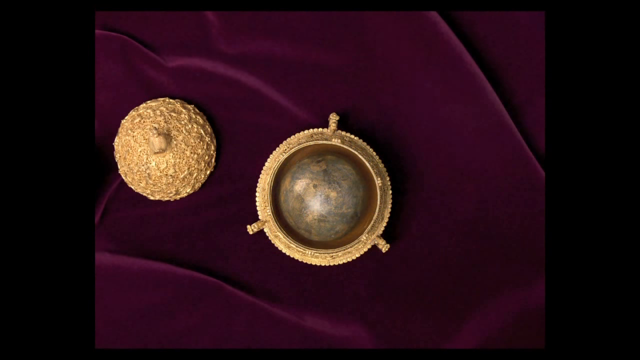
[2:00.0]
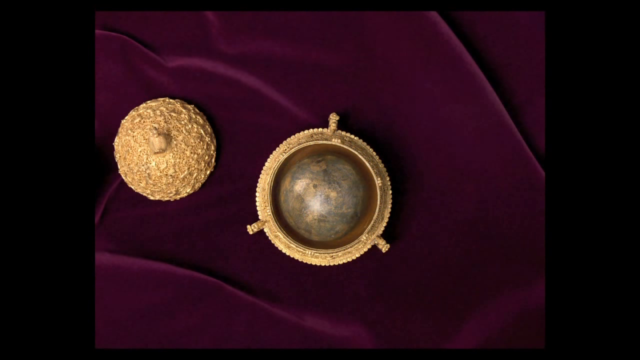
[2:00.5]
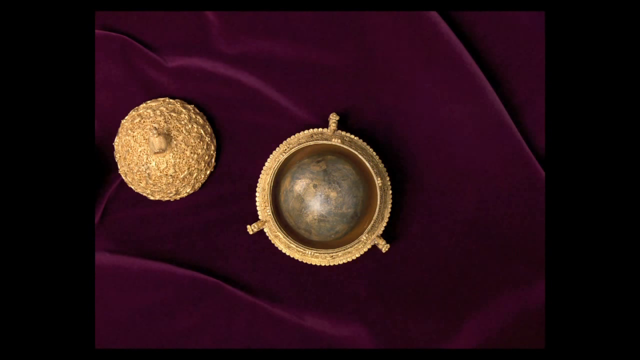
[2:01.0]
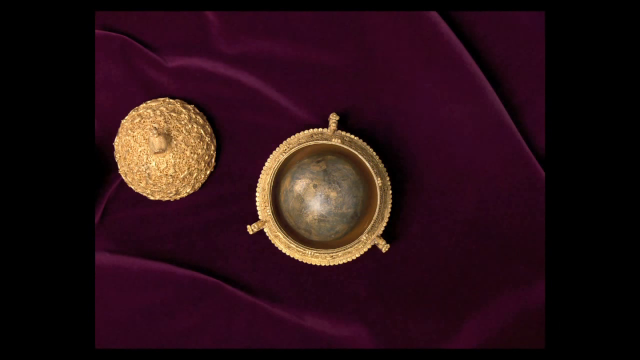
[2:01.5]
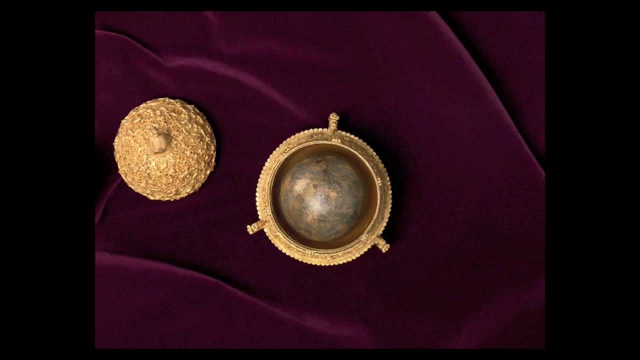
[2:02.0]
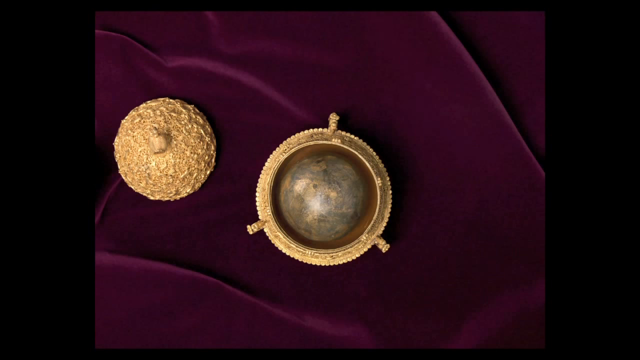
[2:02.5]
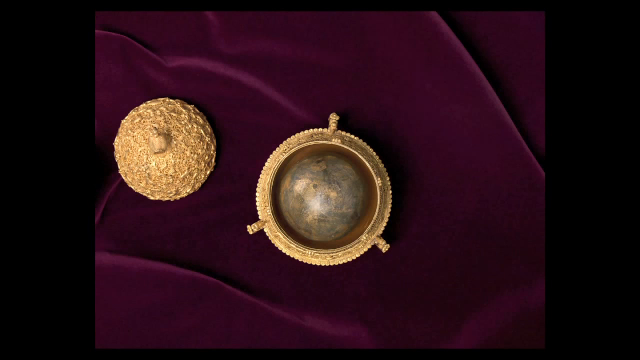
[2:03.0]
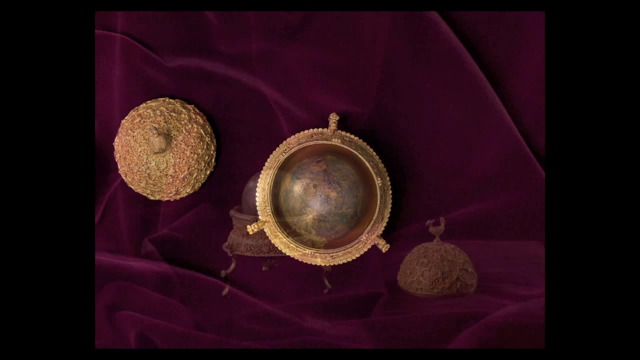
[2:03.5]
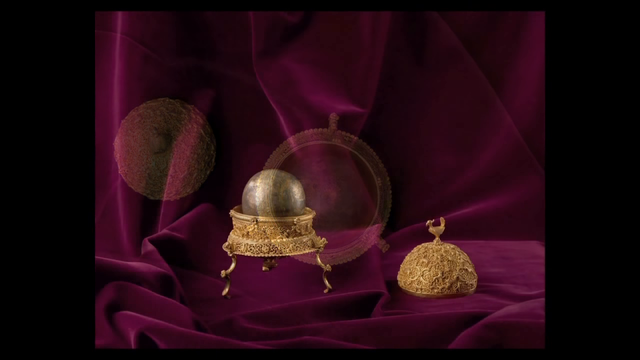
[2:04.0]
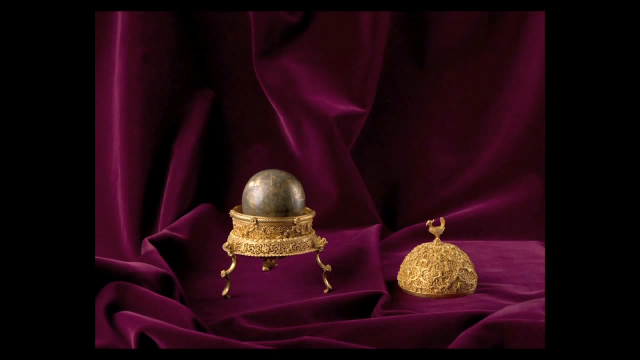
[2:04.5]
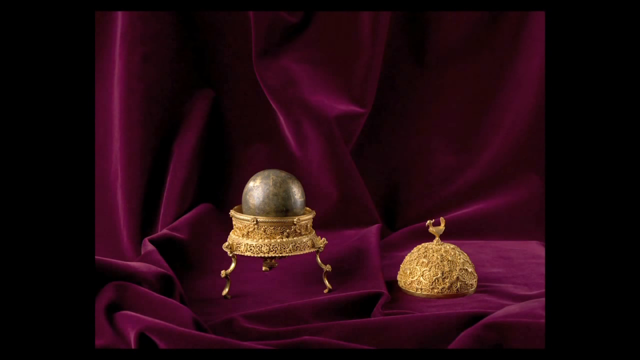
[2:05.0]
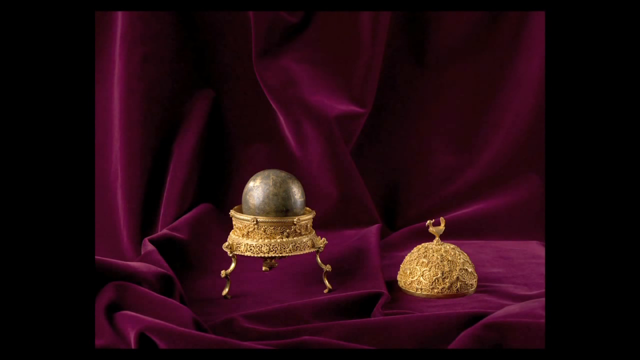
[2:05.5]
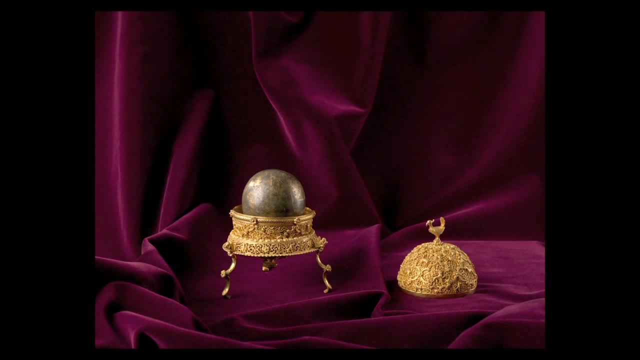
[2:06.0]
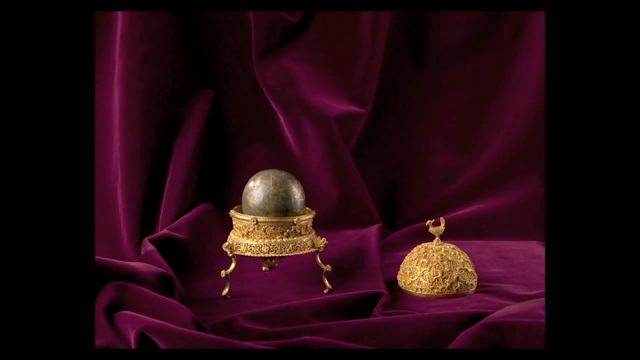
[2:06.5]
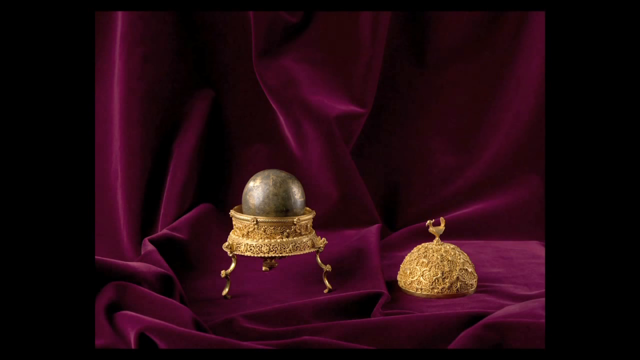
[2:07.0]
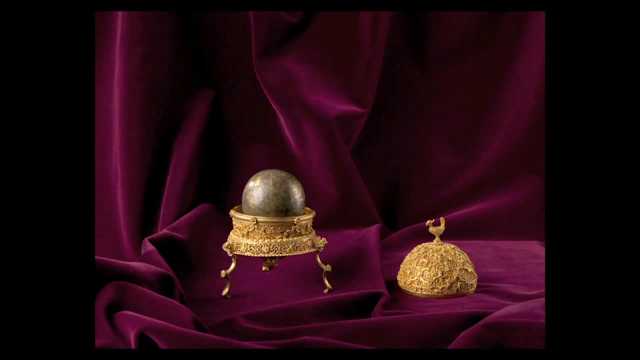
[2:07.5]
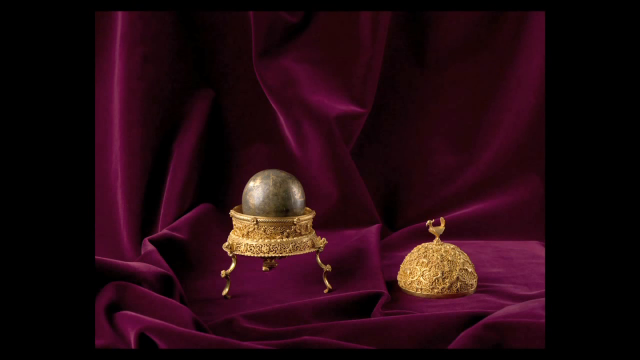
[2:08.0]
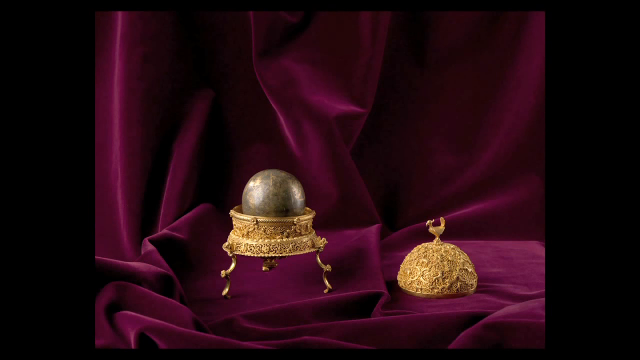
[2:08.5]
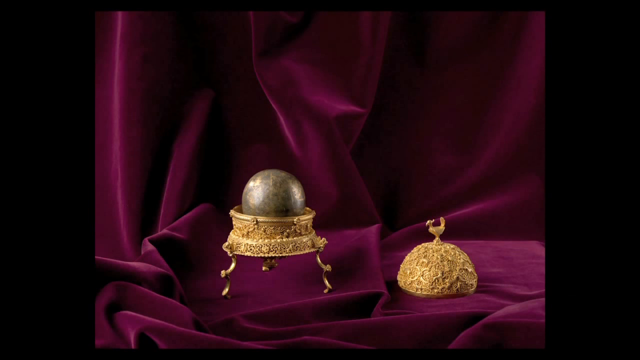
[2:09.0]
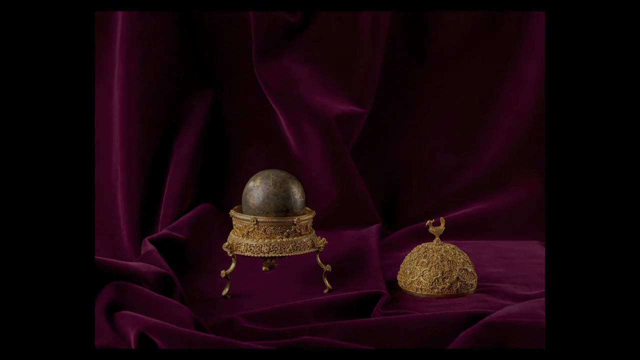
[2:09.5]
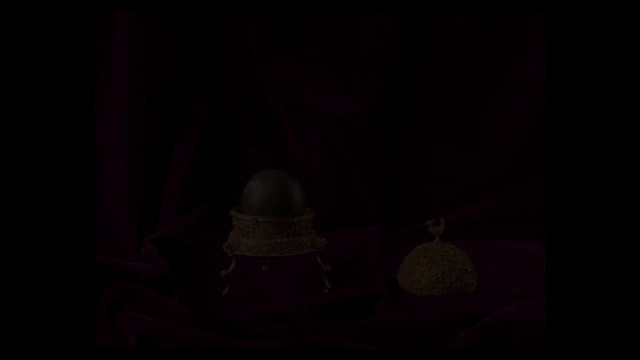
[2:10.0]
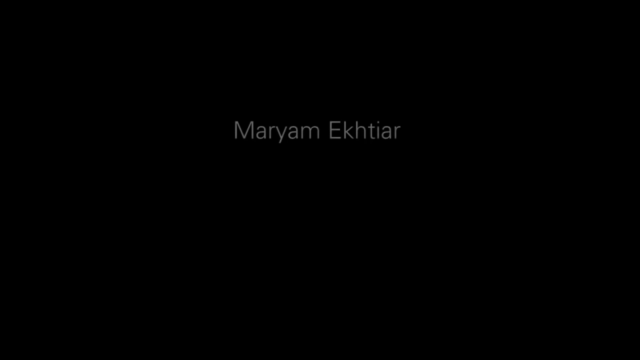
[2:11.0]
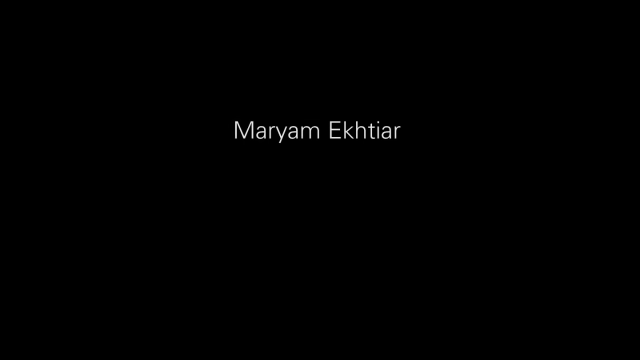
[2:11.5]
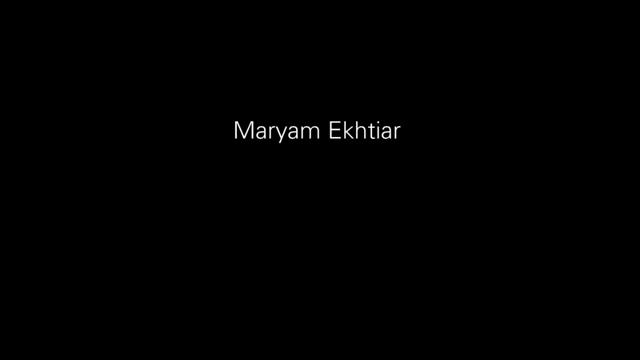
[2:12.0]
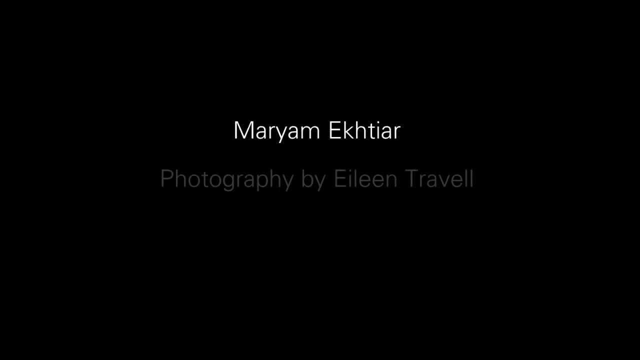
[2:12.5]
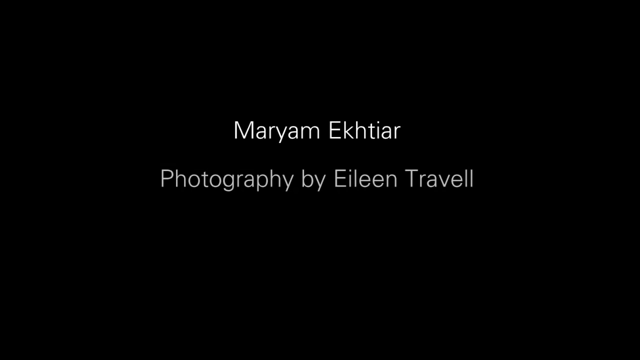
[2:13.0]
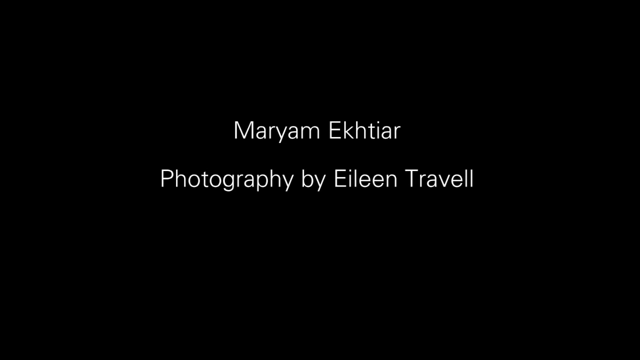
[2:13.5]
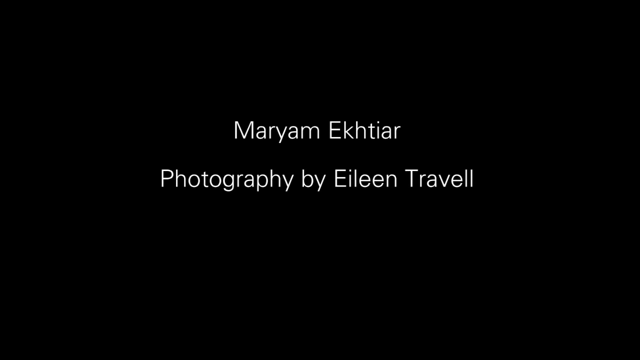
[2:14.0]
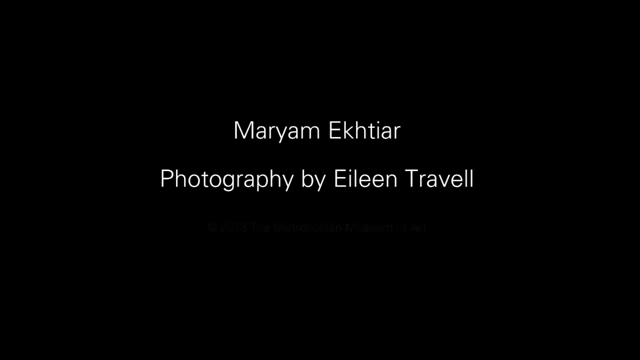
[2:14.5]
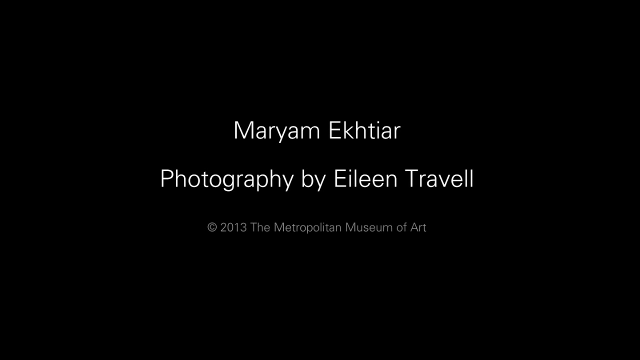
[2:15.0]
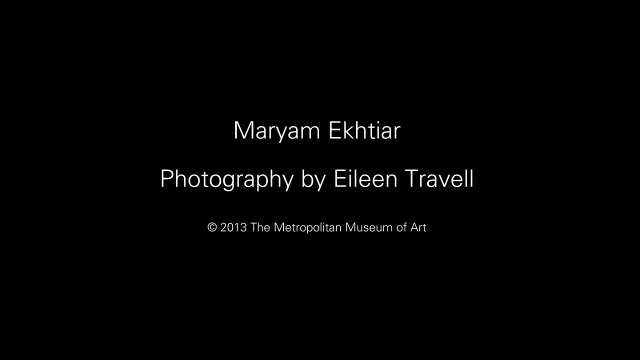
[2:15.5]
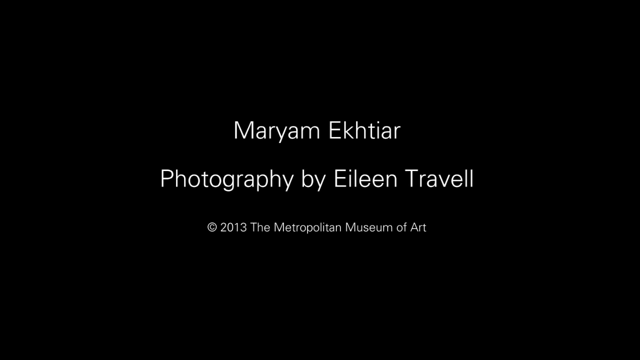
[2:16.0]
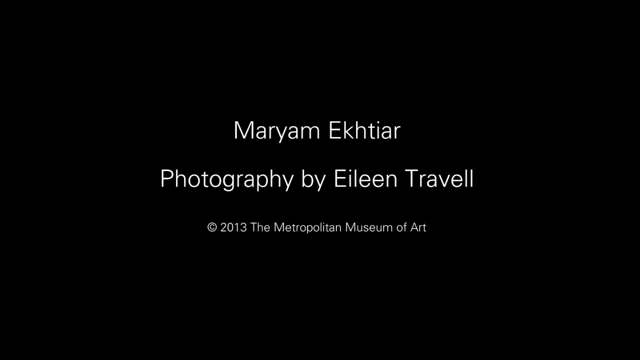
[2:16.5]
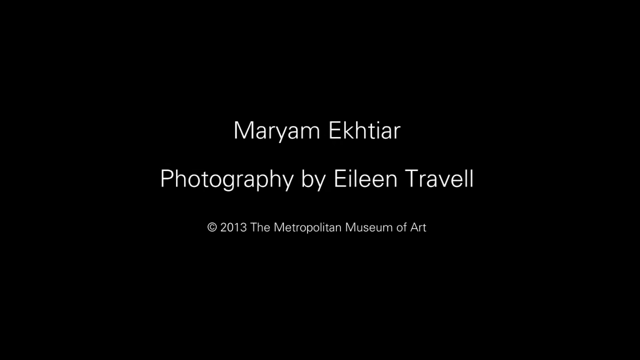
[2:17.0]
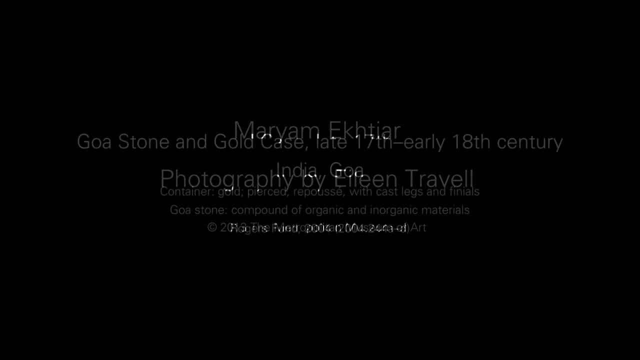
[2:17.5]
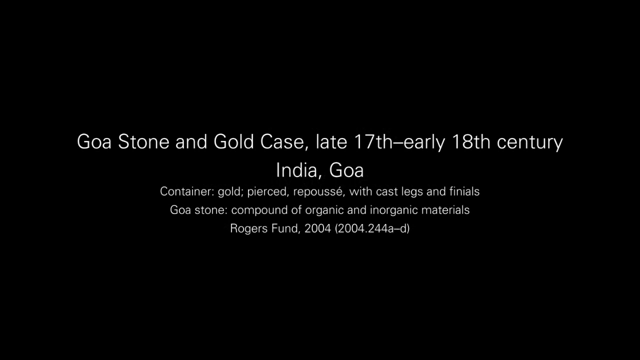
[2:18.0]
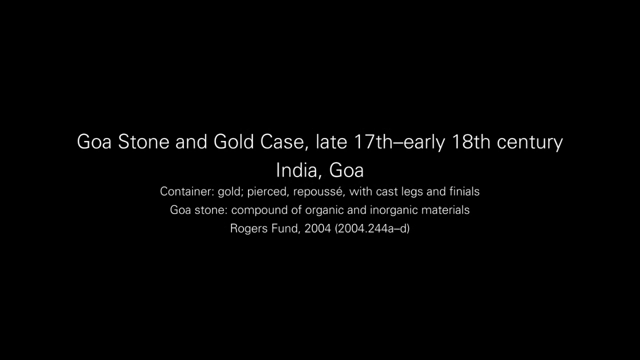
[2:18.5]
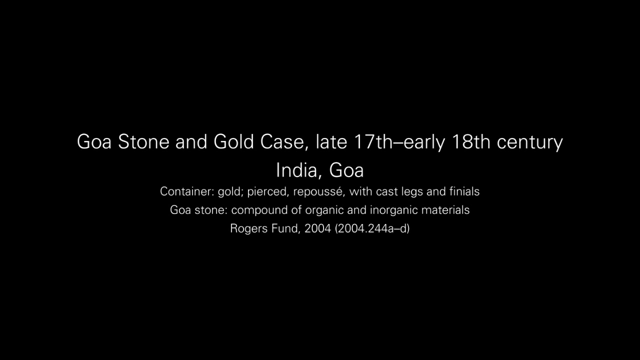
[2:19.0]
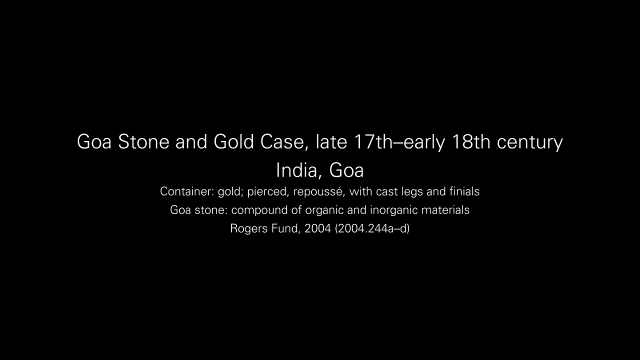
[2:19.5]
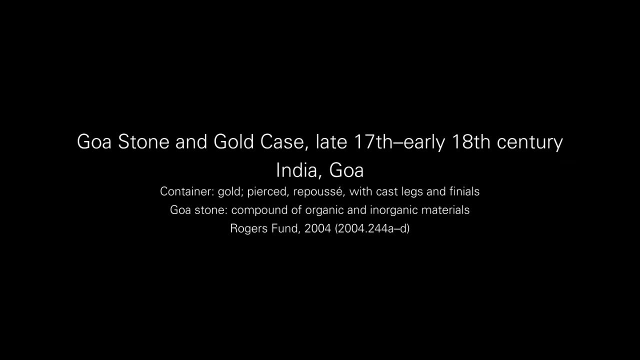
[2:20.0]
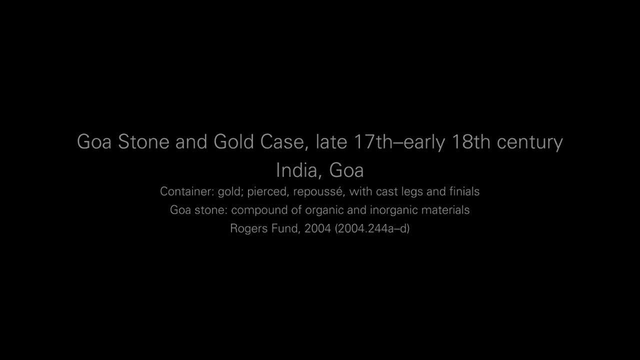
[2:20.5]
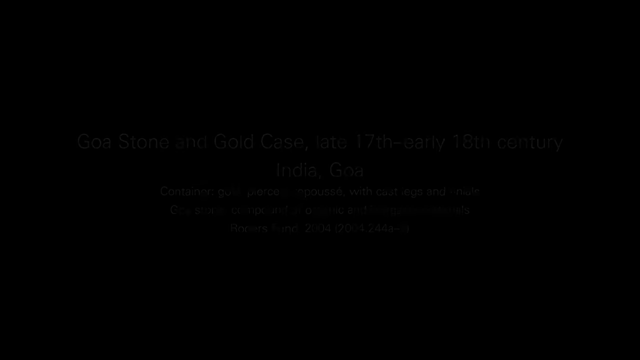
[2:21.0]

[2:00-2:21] A golden-coloured ornament, which appears to be very heavy, is standing on a maroon type of cloth that also appears very silky. Various animal patterns are seen on it, such as birds, dogs, cats, giraffes and monkeys, and closer views show these patterns. There are also some flower-like patterns. Then only the bottom part is seen; it has three stands and an item inside it, which fits in as if it was specifically made for it. The item appears to be some type of jewel or rock placed in the middle. Its colour is brown mixed with black; it does not have much colour and looks very dull.